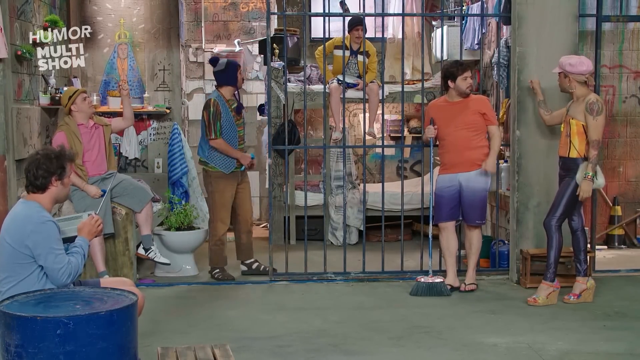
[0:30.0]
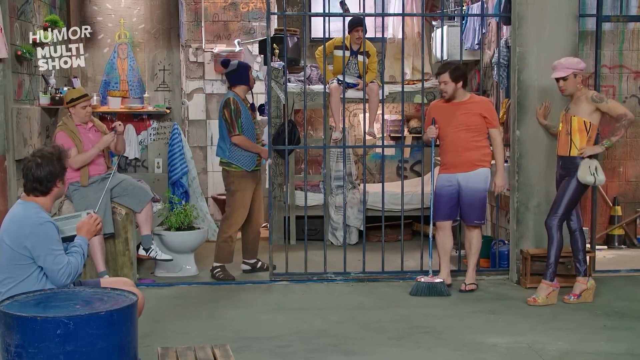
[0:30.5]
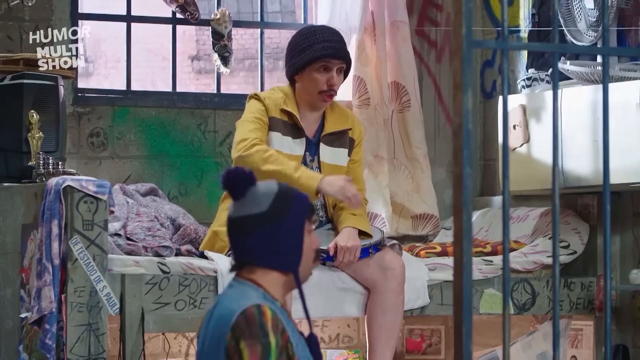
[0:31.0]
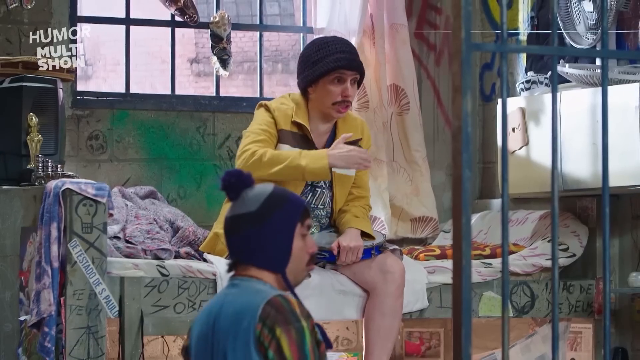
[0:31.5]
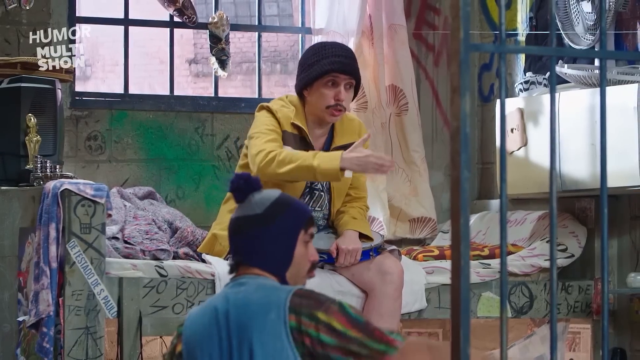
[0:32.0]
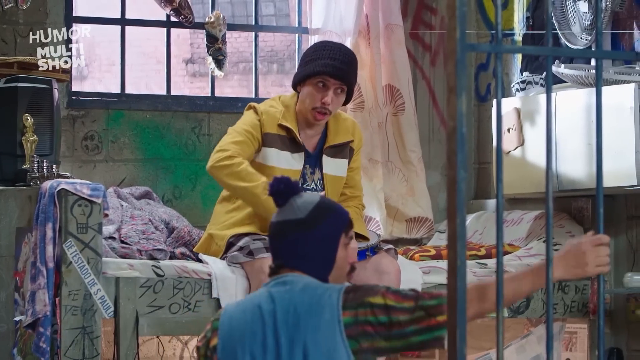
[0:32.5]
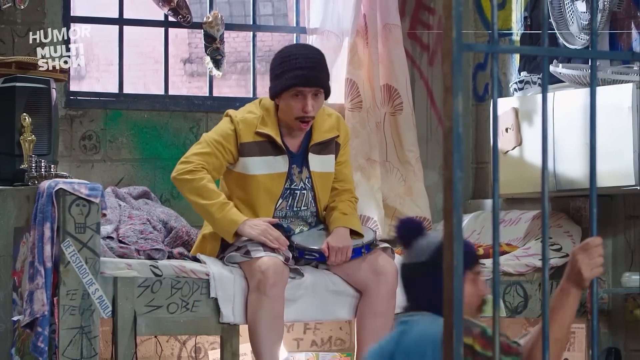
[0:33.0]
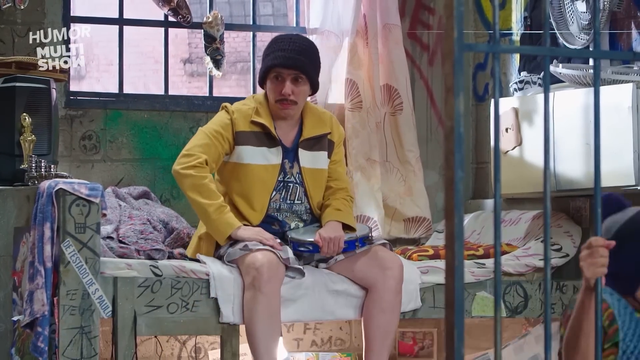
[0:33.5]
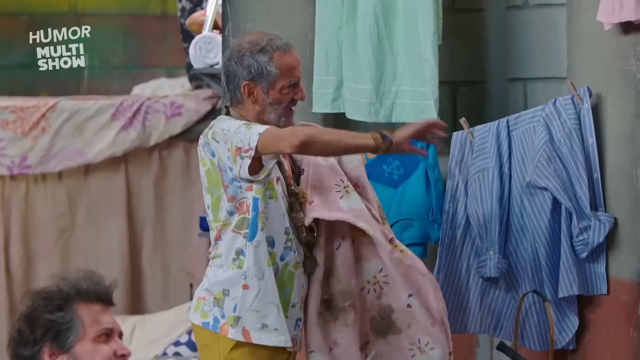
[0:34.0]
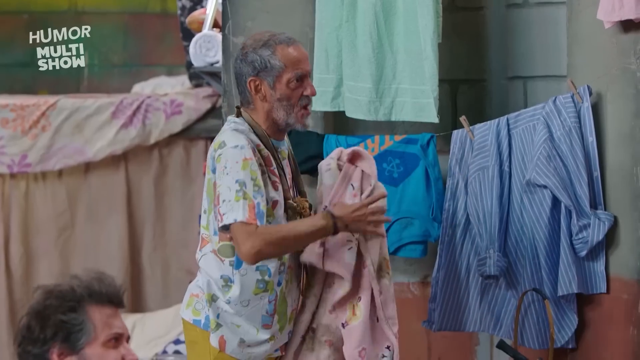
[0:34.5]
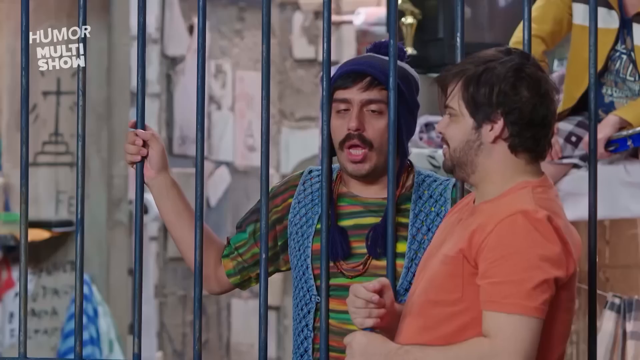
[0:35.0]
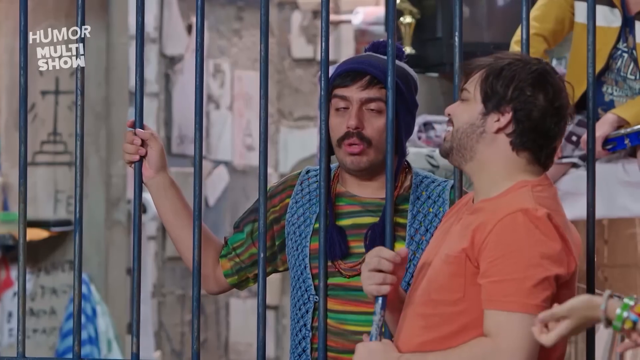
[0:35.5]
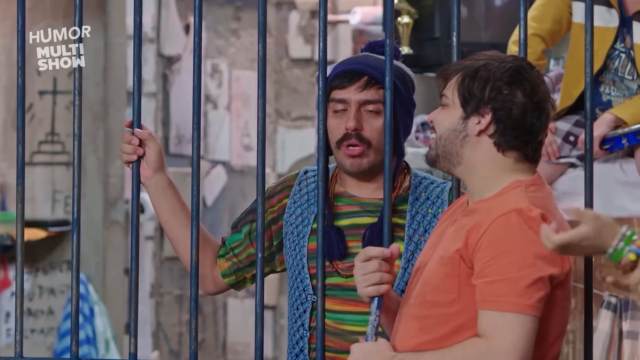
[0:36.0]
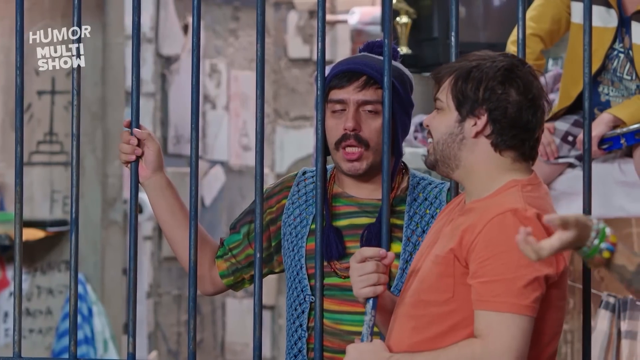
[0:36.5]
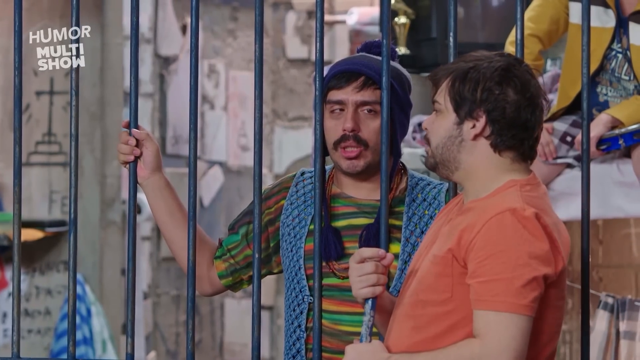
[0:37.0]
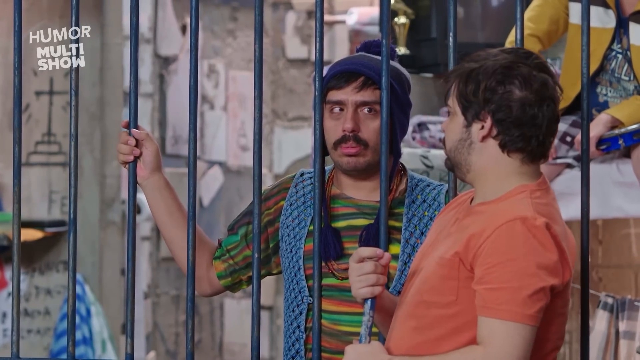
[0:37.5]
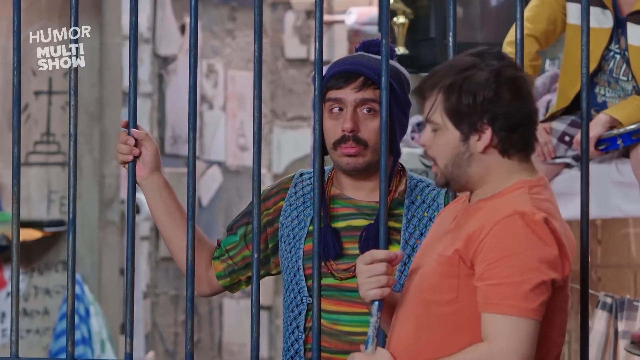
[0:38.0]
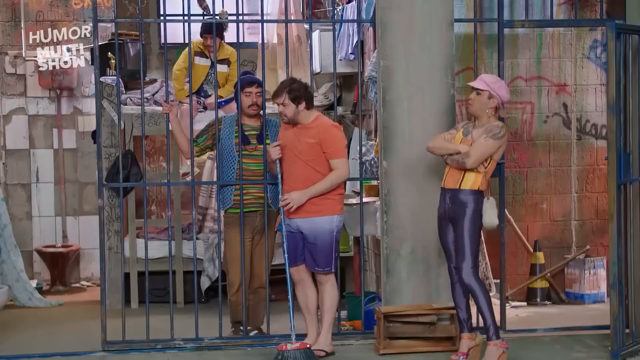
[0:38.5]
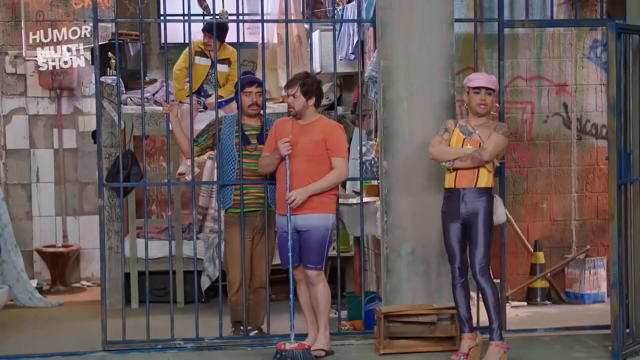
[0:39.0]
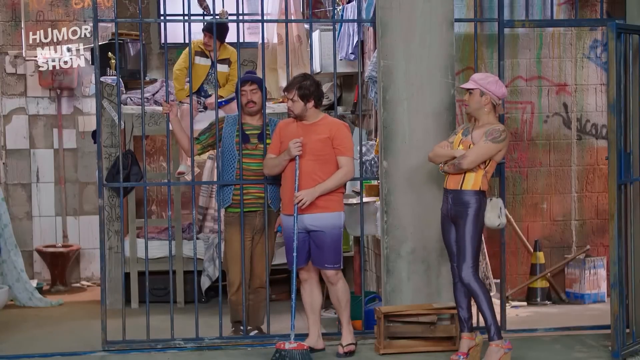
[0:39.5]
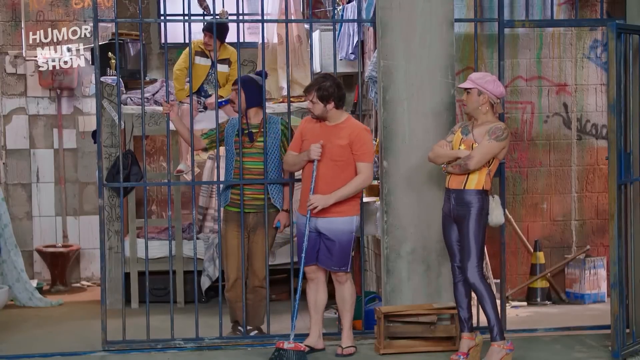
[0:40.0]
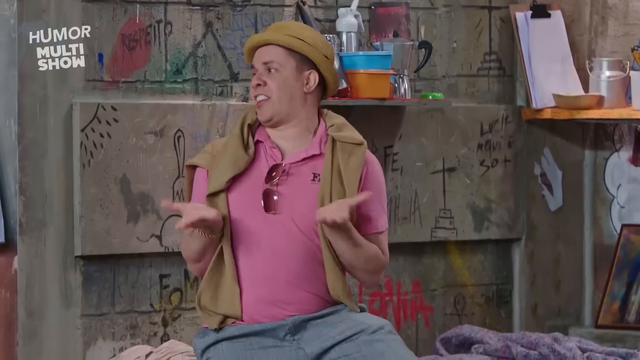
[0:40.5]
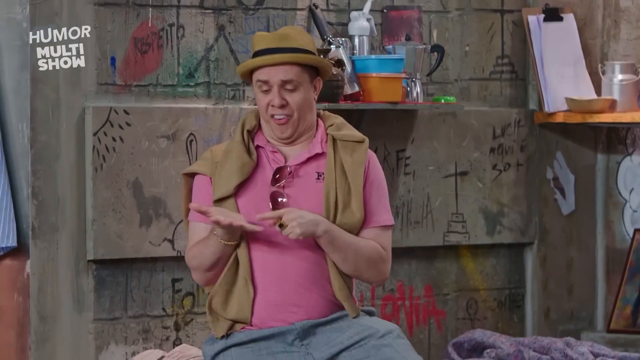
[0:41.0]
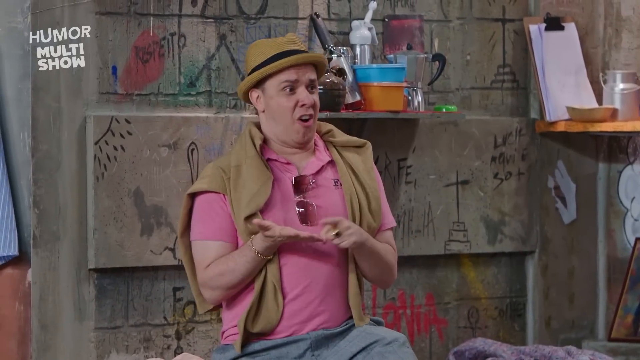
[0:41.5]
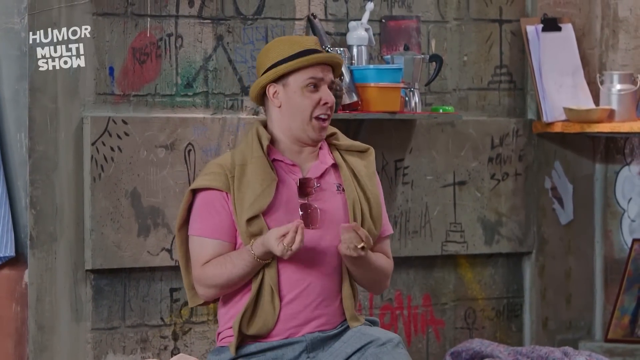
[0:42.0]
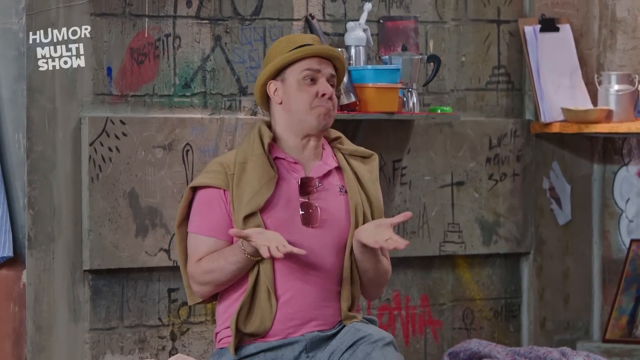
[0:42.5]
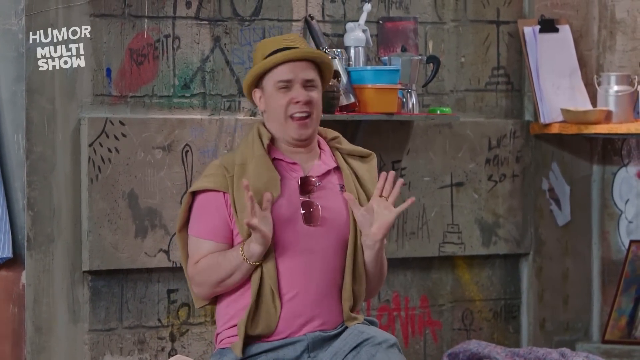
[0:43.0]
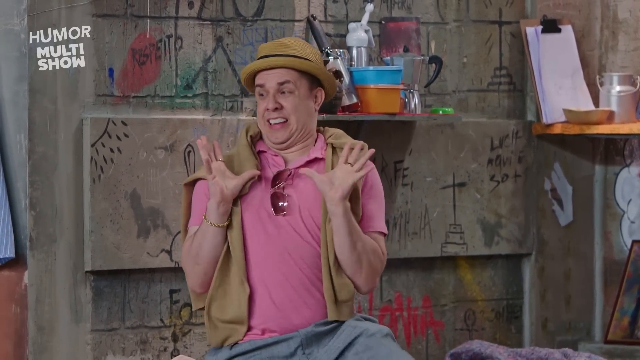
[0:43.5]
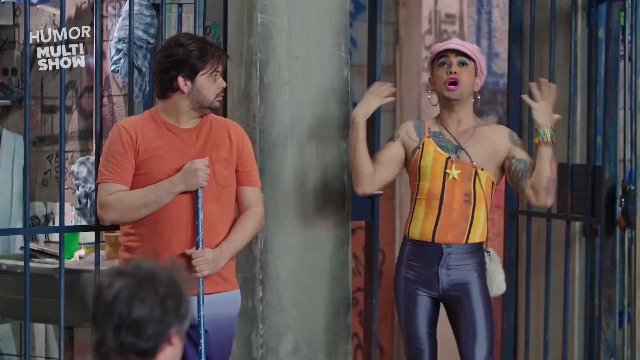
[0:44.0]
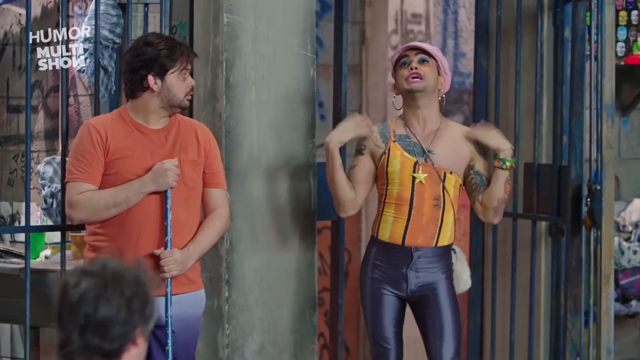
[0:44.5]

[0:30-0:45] Five people are in what looks like a jail cell, chatting with each other; they don't seem to know each other outside of the jail. A person sitting on a bunk bed in a striped yellow, black and white jacket makes a comment. A somewhat flamboyant man in a pink shirt wears a straw hat. A transvestite hooker in lycra spandex and the others are talking to two men who look Hispanic, one wearing an orange shirt and the other a weird hat. A strange old man in a Hawaiian shirt yells about something, holding some kind of fabric or towel. A man in a long-sleeved blue shirt sits observing the whole scenario. The man with the weird hat makes gestures with his eyebrows, and the transvestite prostitute, who wears a lot of jewelry, is very expressive about something.